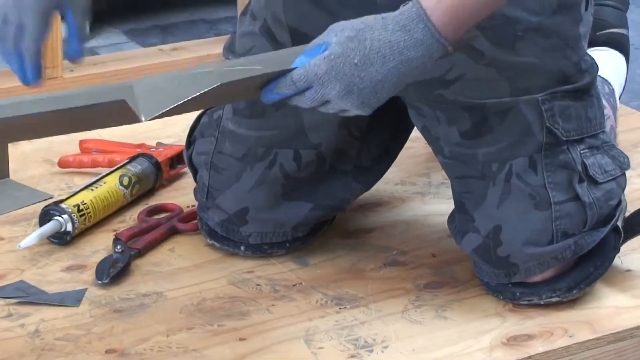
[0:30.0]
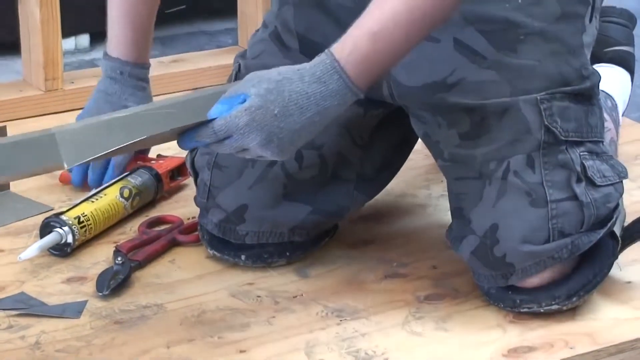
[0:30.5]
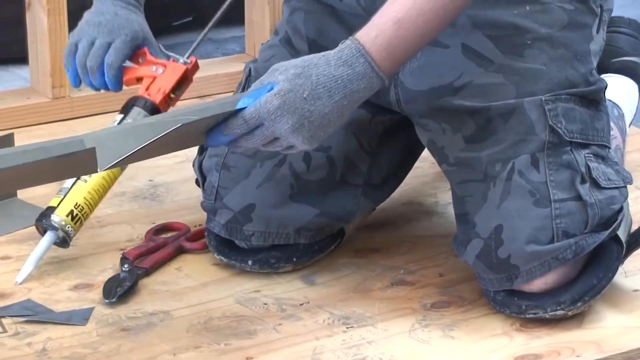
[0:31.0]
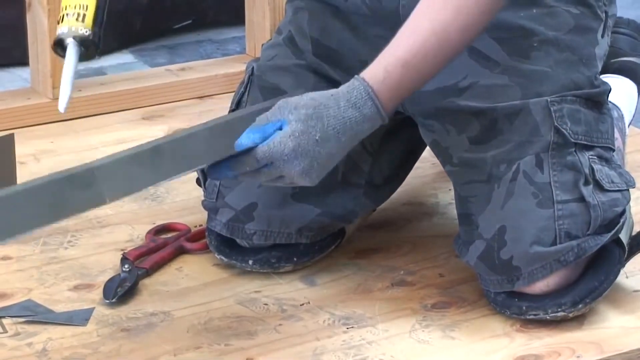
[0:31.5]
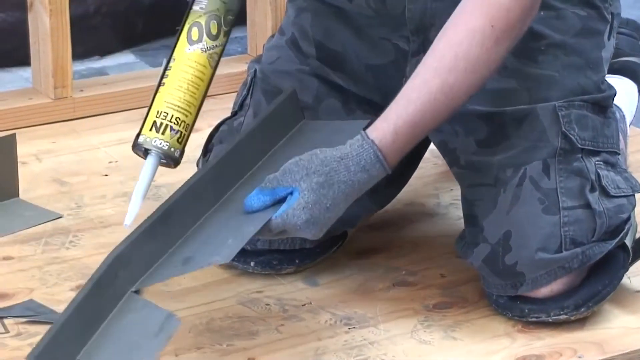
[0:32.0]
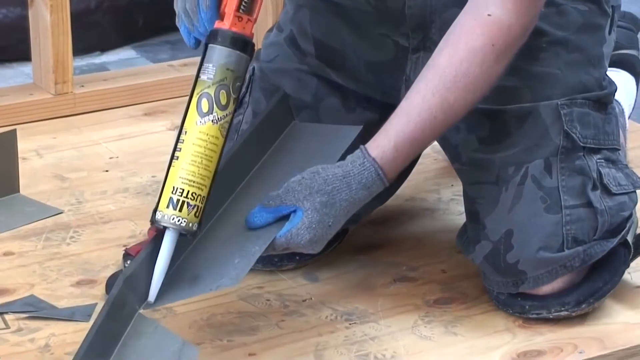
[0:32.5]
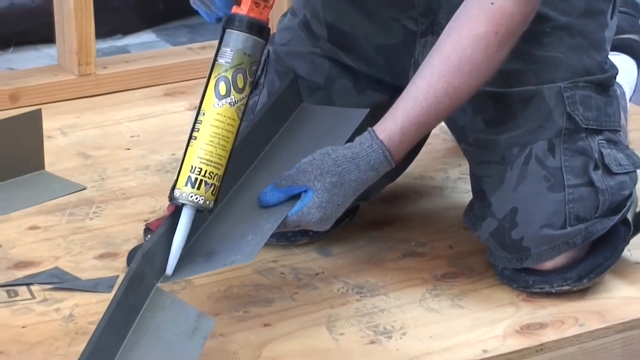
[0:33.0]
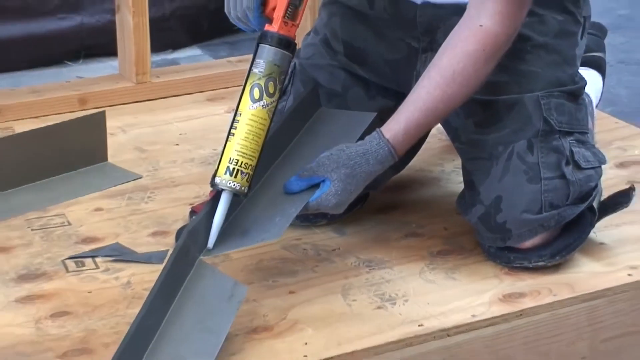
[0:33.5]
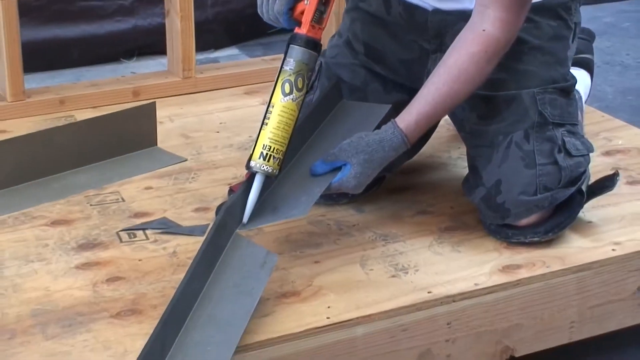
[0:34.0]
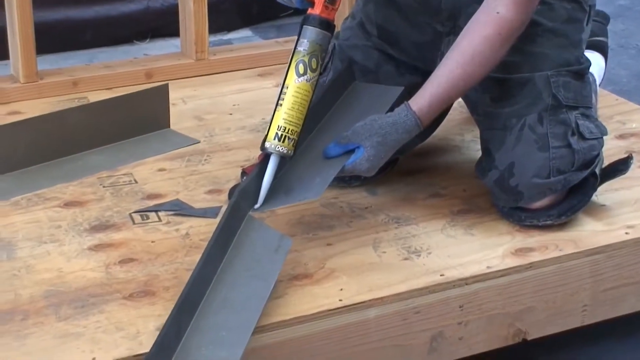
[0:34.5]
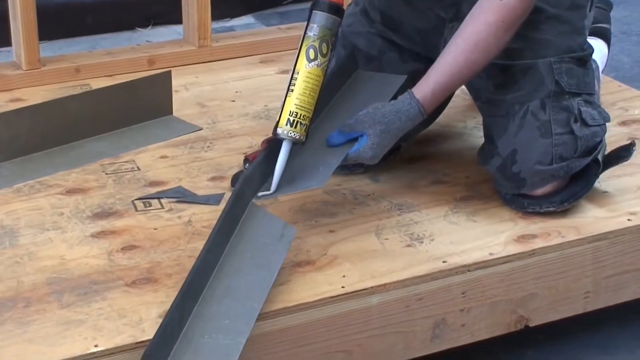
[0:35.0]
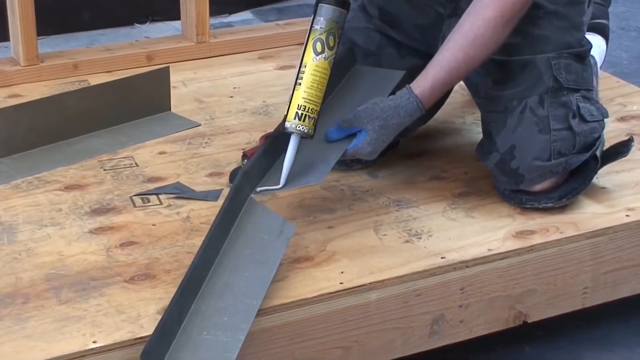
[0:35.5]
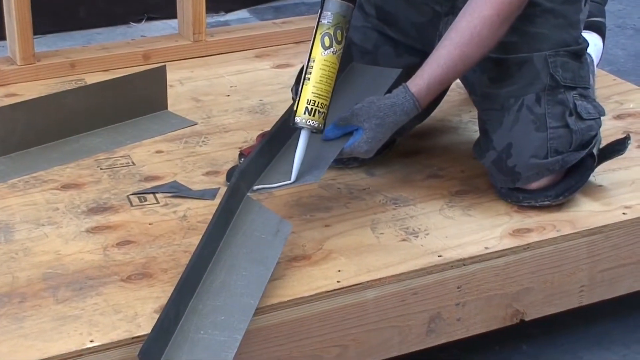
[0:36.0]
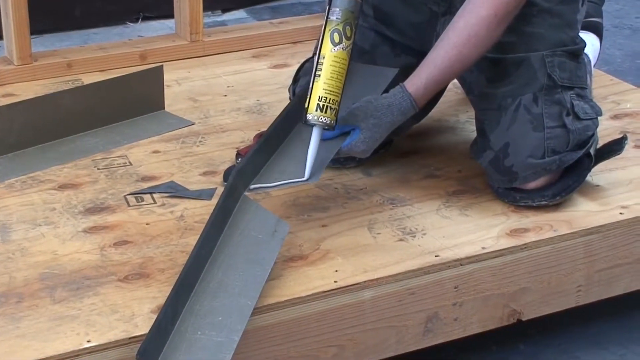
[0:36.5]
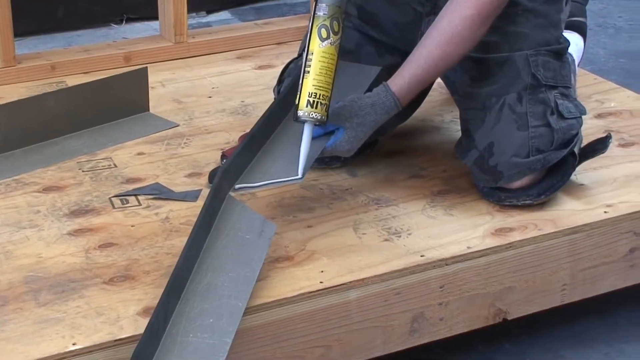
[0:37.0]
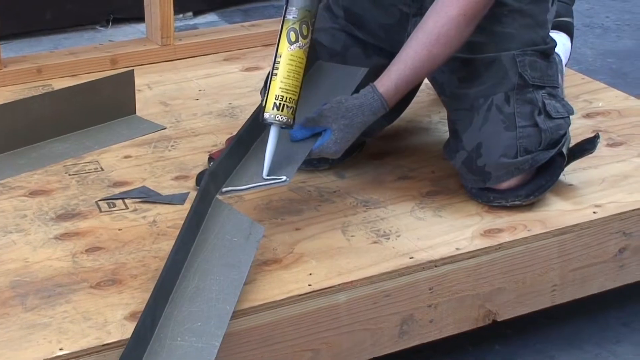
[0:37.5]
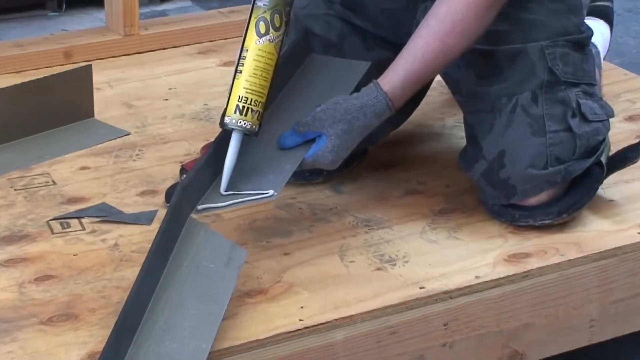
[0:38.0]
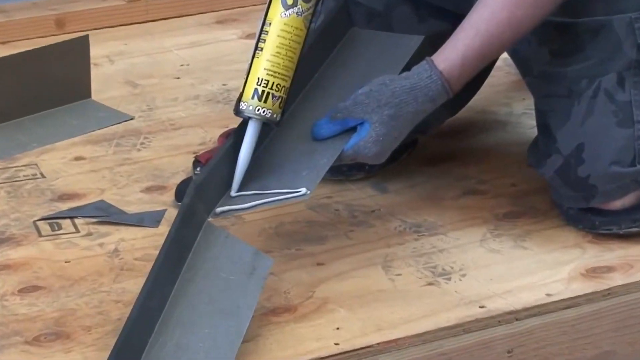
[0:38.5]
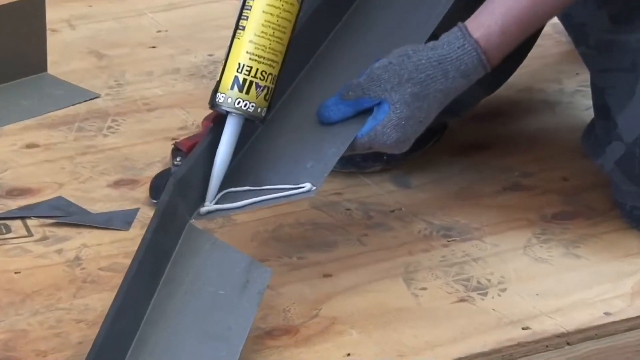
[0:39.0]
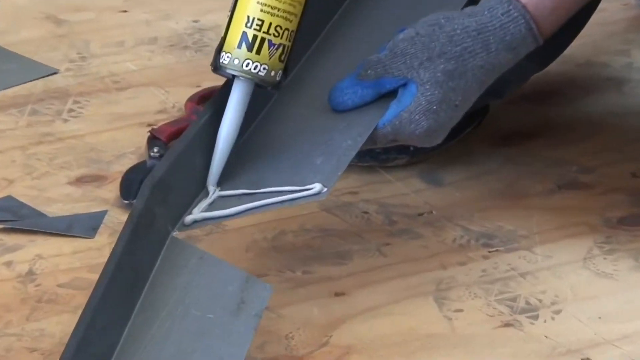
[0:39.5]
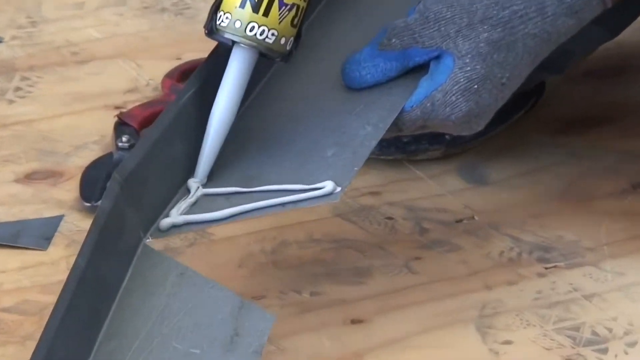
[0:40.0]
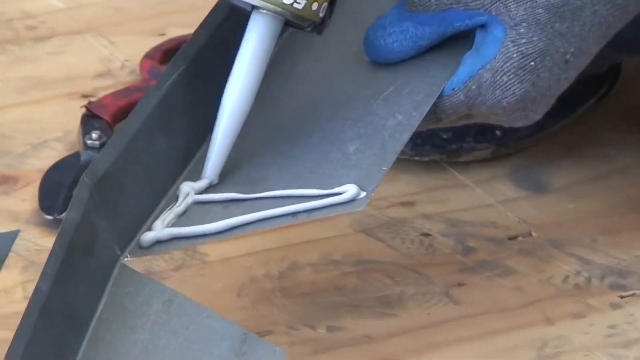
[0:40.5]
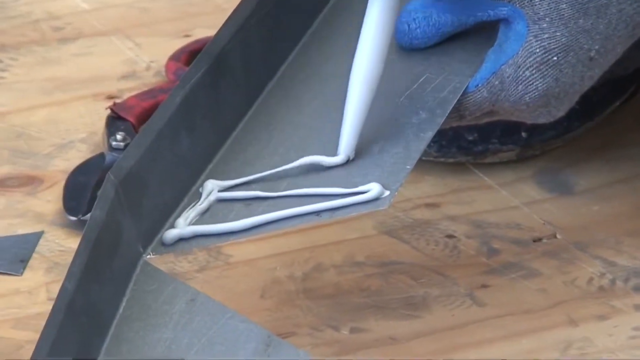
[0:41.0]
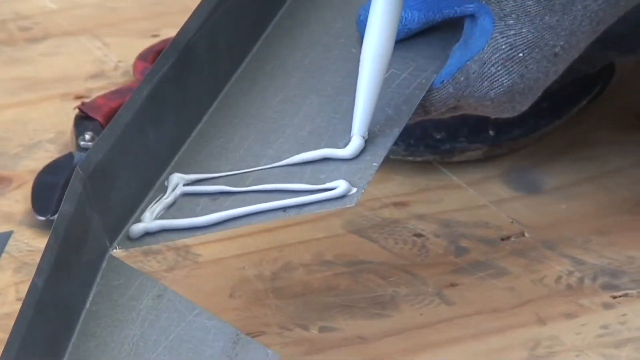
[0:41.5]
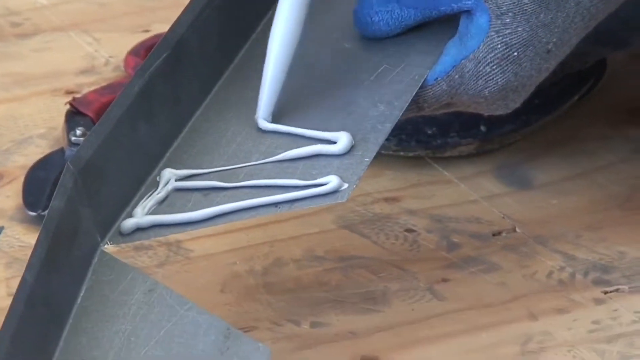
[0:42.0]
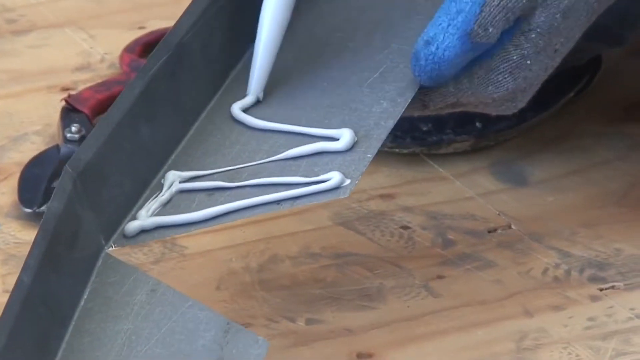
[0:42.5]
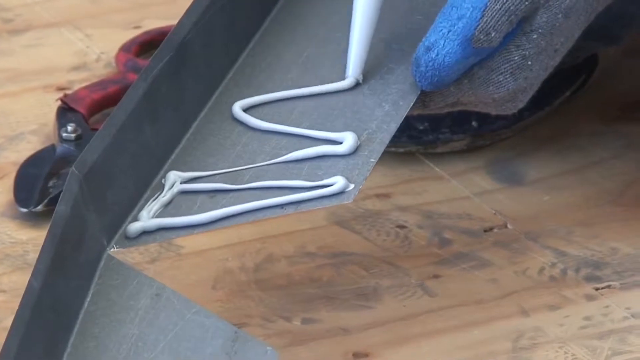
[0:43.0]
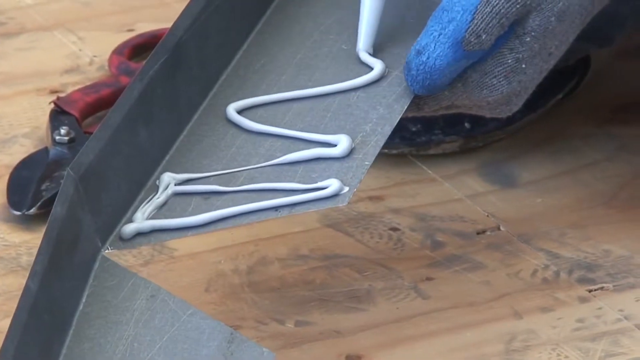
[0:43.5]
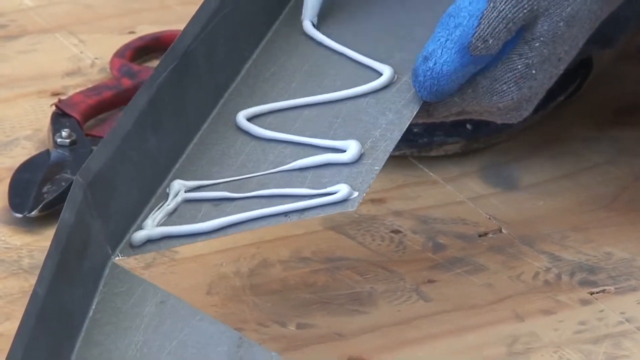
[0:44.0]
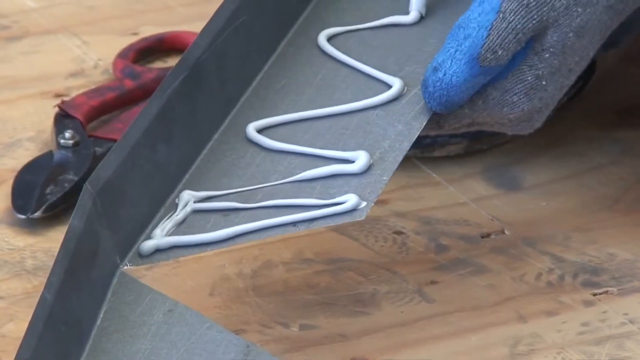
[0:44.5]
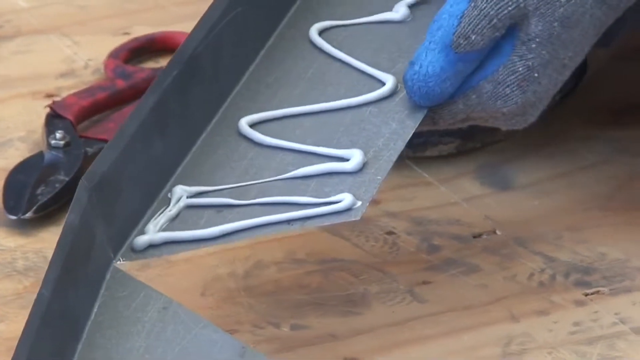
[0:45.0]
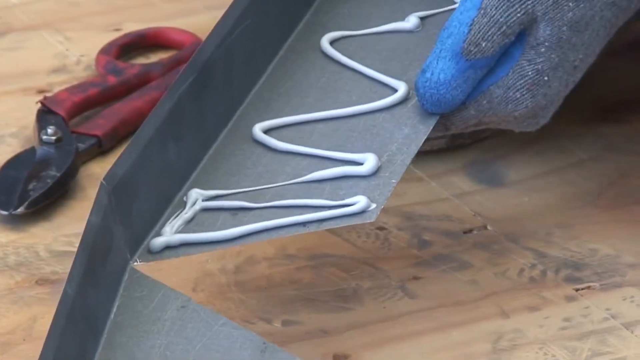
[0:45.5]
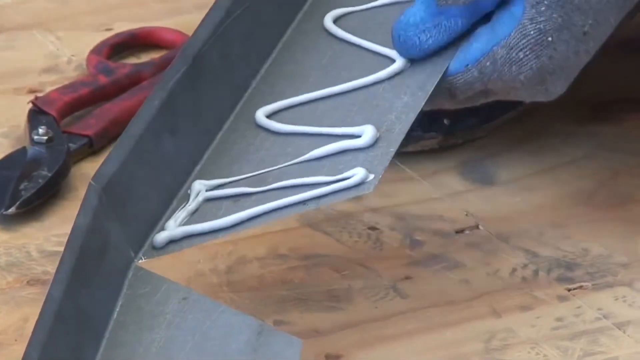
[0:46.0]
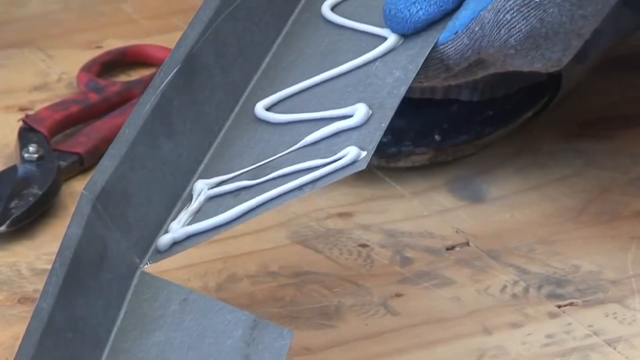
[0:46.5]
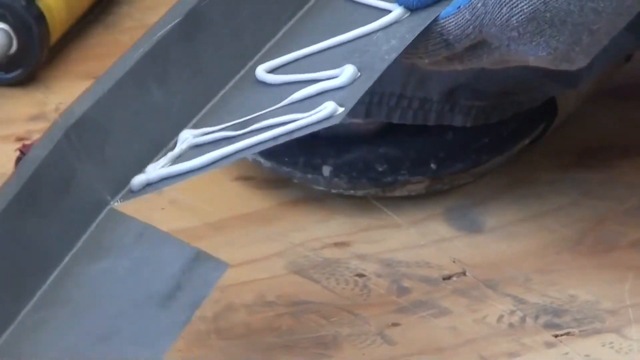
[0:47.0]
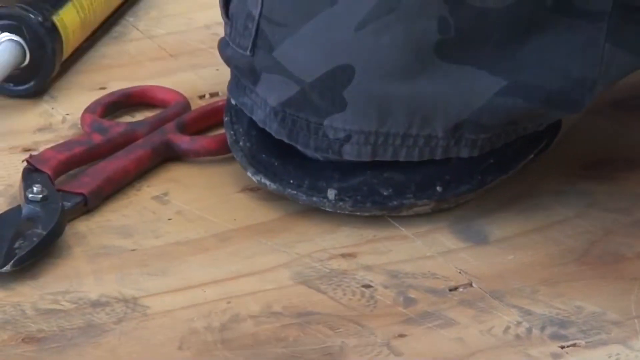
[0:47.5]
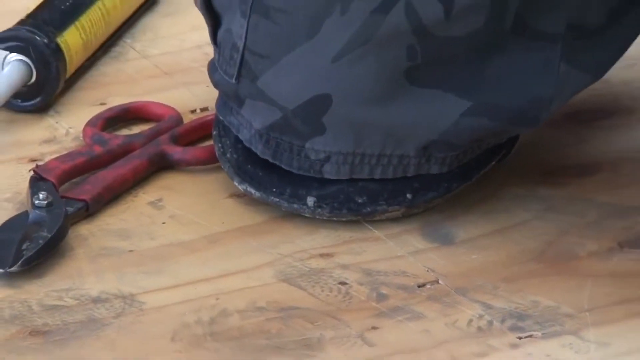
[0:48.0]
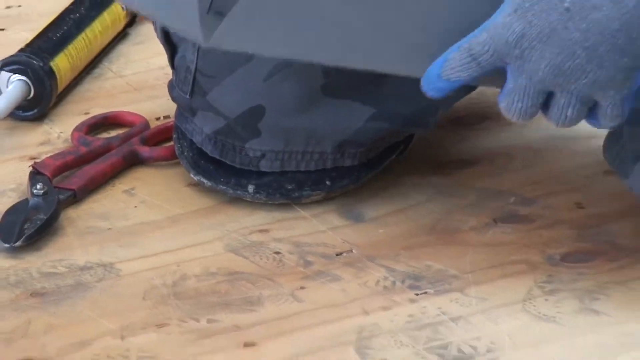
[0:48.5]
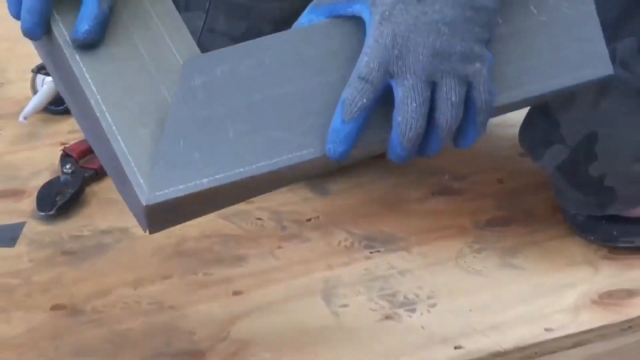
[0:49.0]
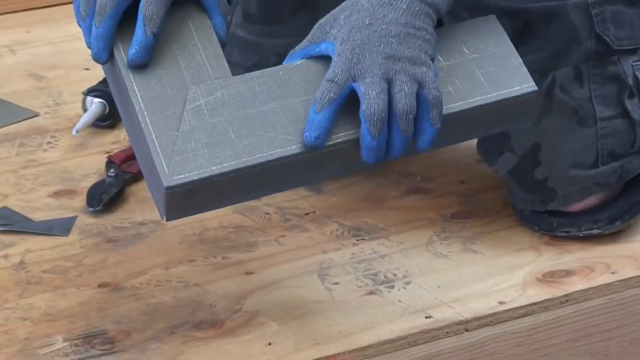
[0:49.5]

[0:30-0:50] The person kneels, wearing cargo pants and gloves, holding a joint together at a 90-degree angle. On the floor are some tools and a bottle of silicon. He picks up the silicon syringe and seems to turn the piece upside down, showing the corner edge, then puts the silicon or glue onto the middle of the piece in a wavy line pattern, along with a small triangle. He turns the piece over, and it appears to overlap; it is a hollow, L-shaped plate. He is kneeling on the wooden decking he was sweeping earlier, and there appears to be a hole or gap in his trousers at the left knee. The material looks like plastic or tin that he has cut, and the cut-off lies on the ground on the left-hand side. He folds it over and presses the two pieces together, creating a 90-degree join.